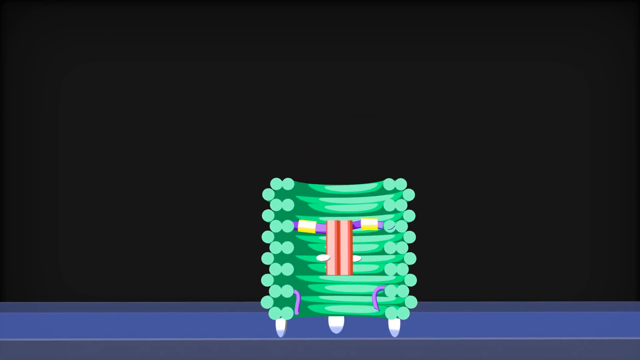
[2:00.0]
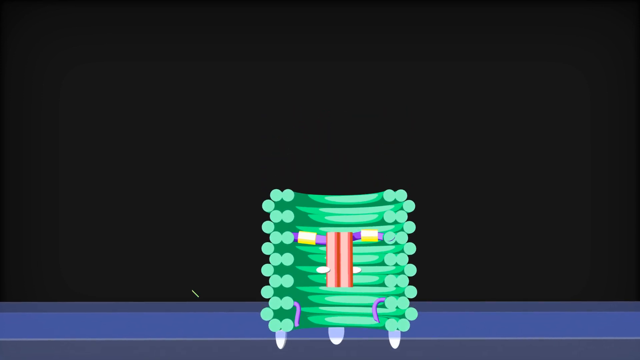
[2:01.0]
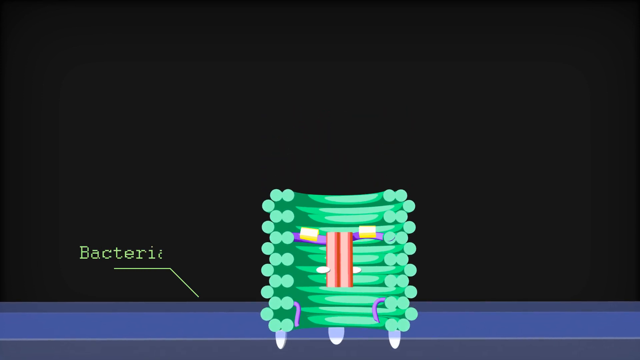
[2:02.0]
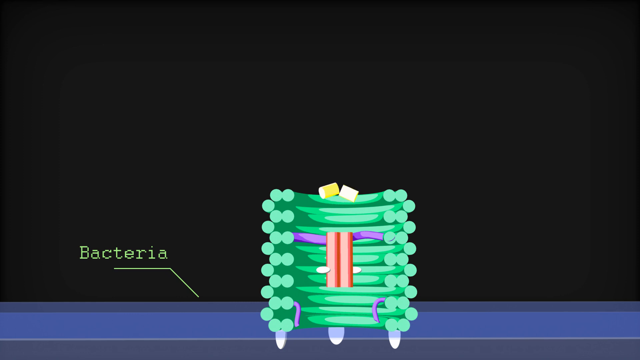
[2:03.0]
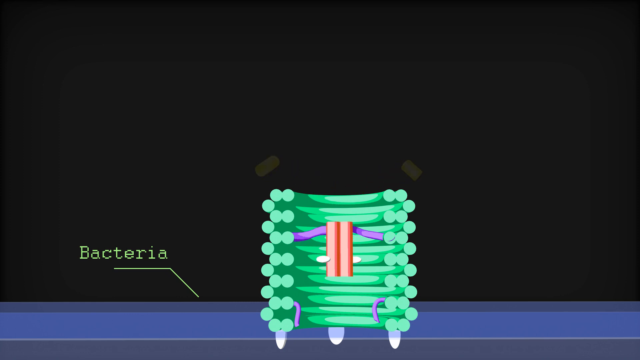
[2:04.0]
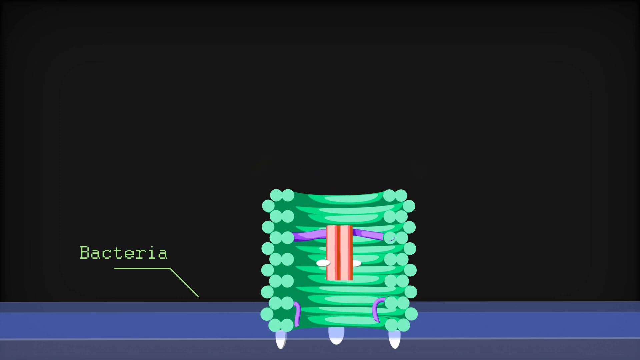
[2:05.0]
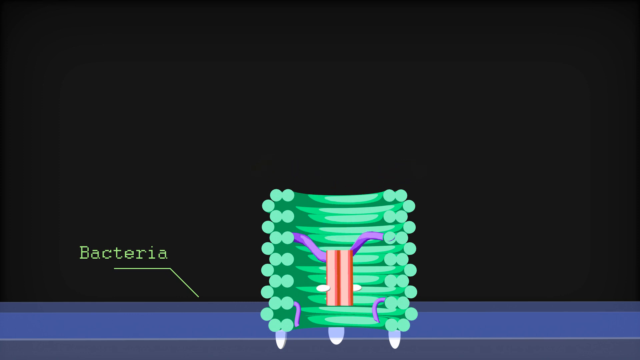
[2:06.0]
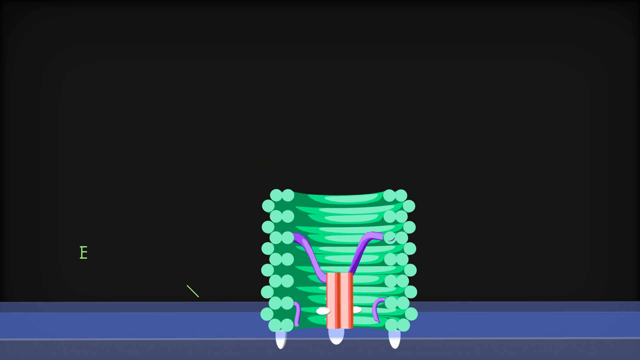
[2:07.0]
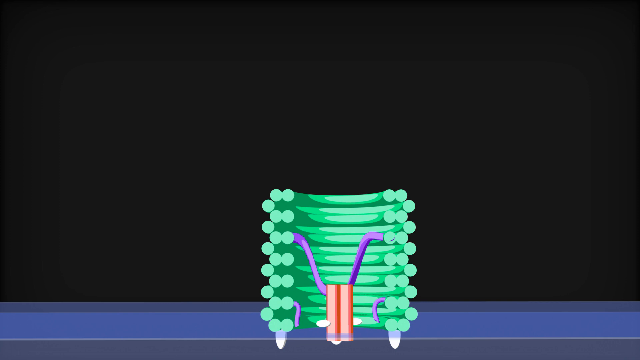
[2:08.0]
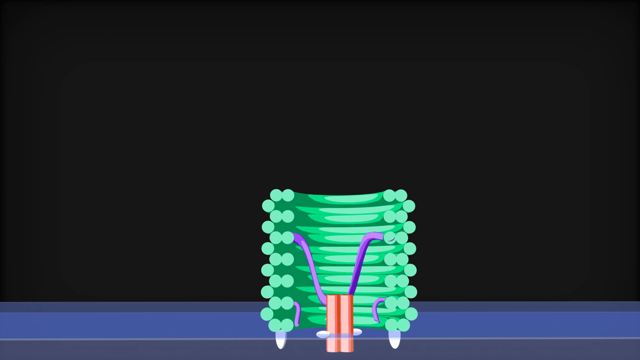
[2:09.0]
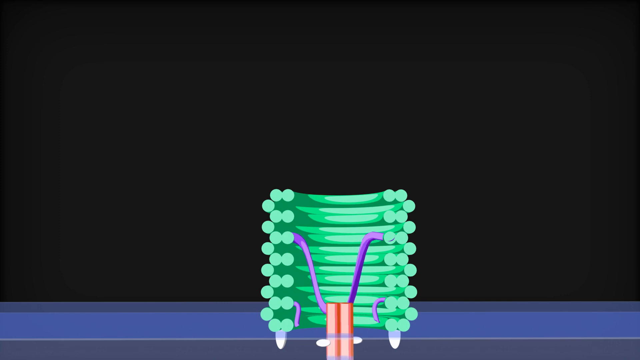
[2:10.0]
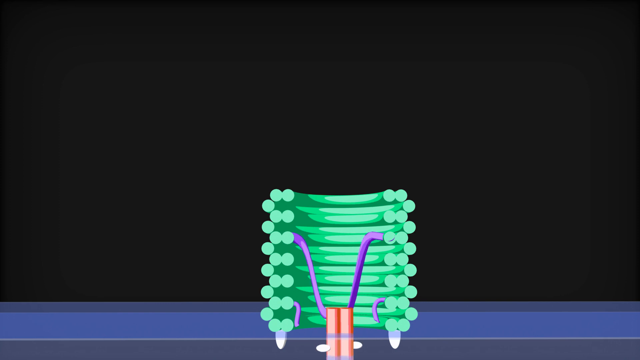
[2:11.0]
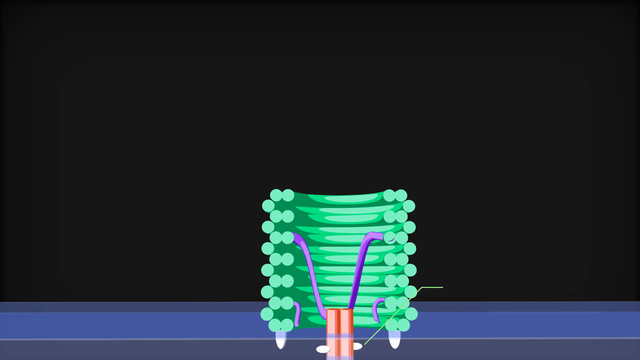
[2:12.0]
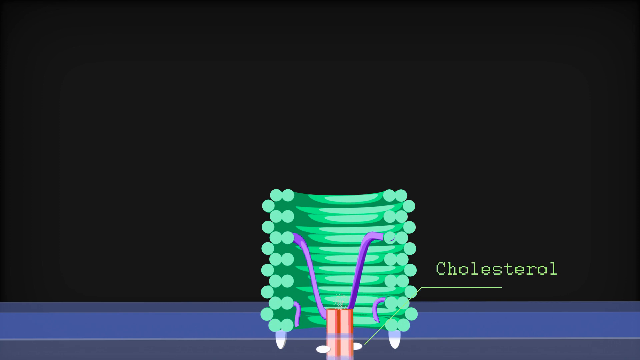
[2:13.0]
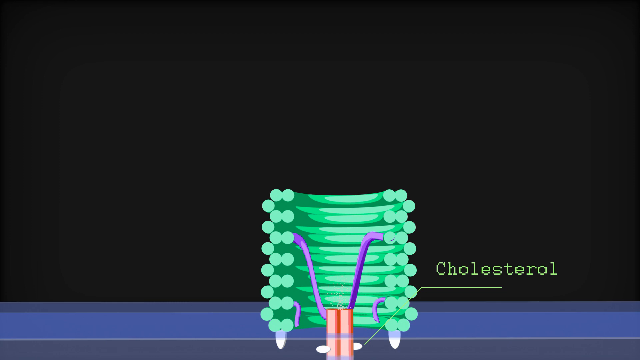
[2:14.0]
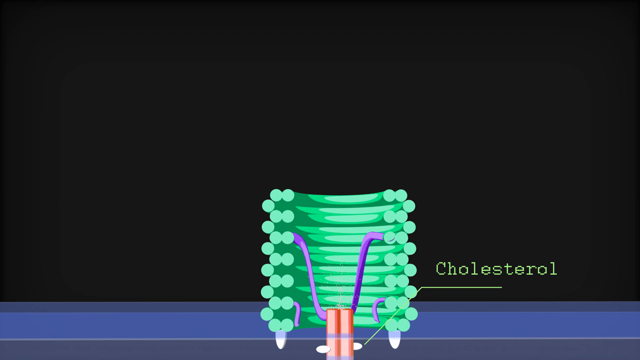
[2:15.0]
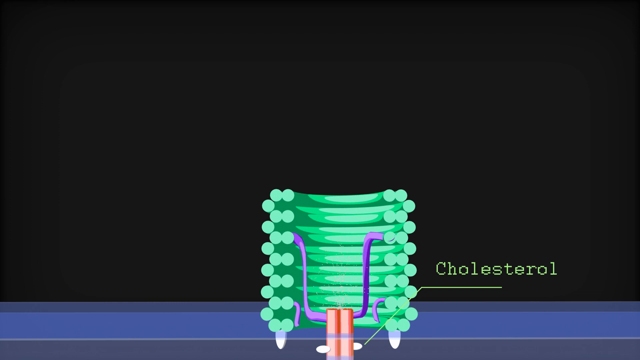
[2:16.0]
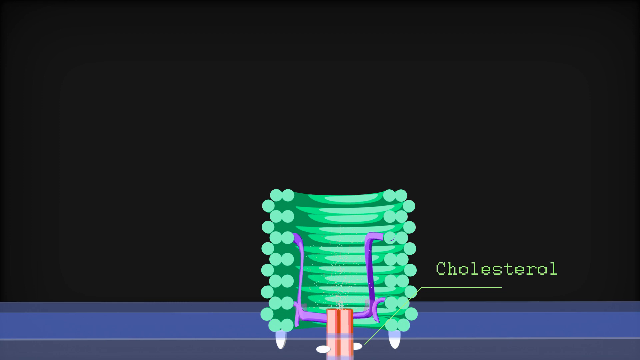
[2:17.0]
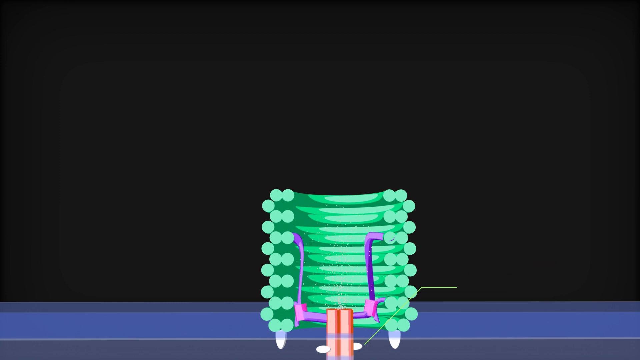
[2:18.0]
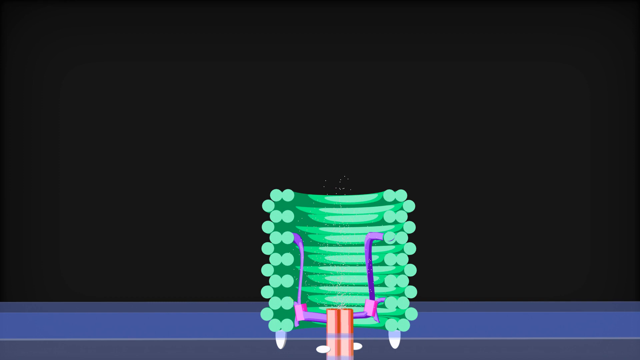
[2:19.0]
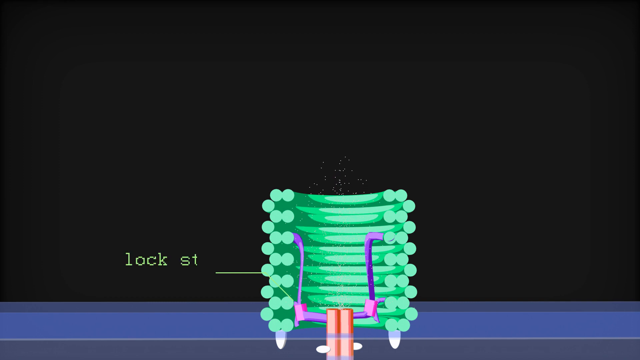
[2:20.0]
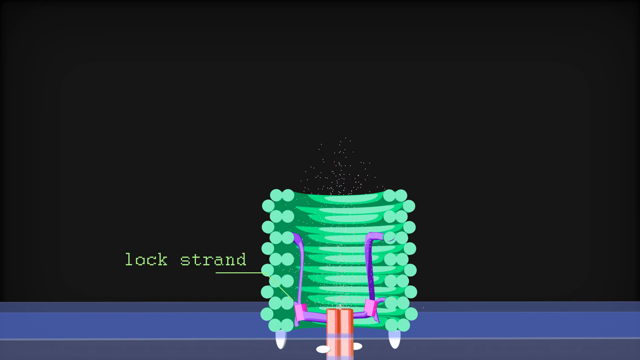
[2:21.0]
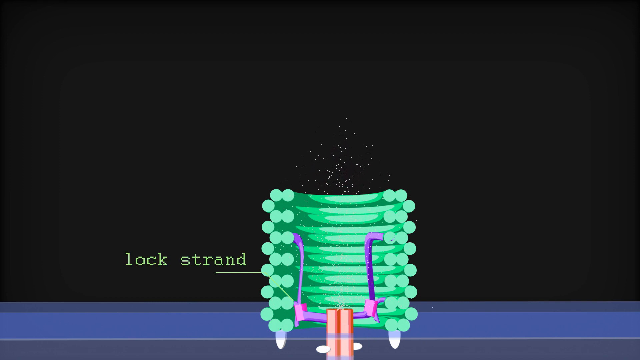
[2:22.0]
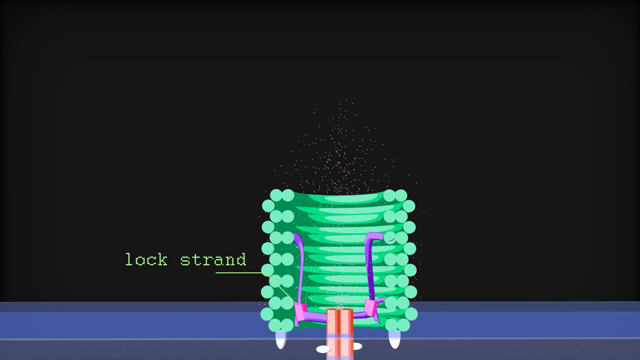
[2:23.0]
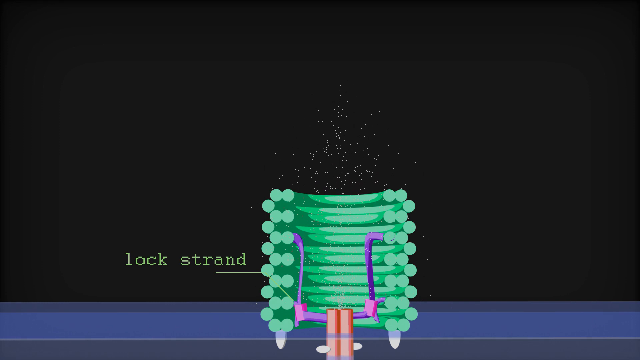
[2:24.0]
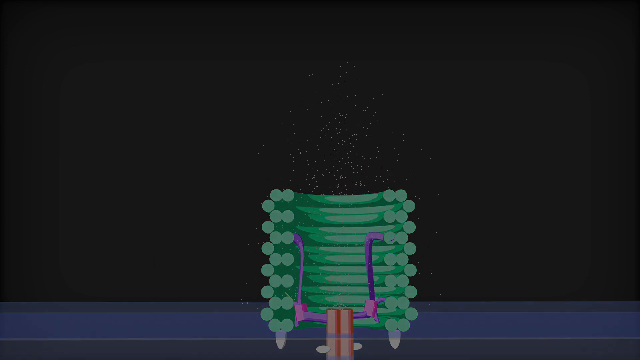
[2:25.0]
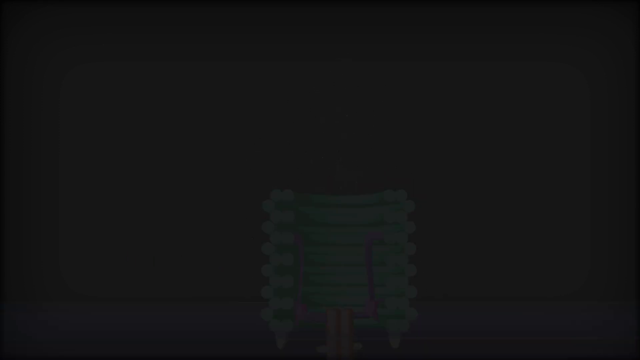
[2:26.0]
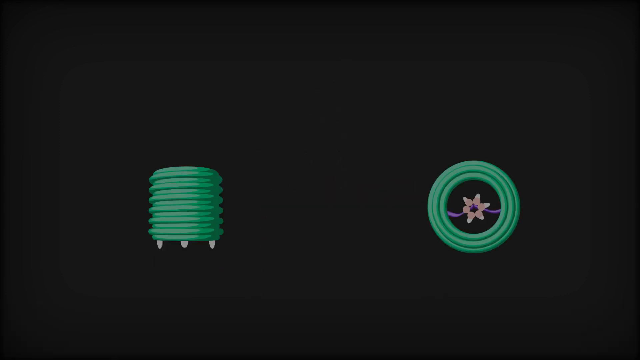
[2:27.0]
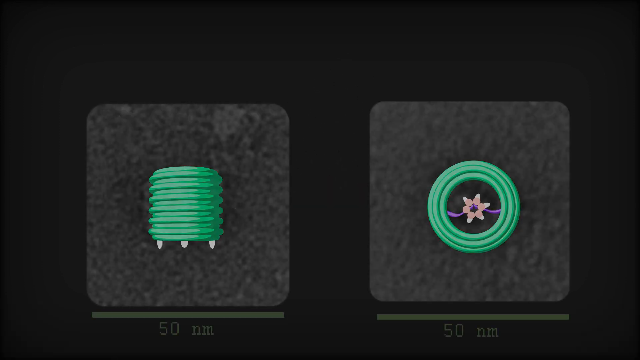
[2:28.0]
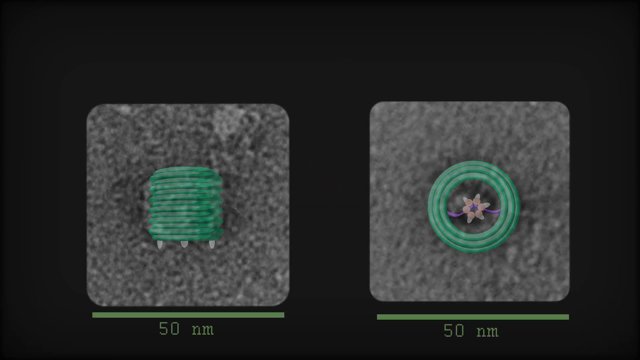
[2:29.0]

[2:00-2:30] Text reading "bacteria" points to the bottom of the frame, though what it indicates cannot really be seen. The pink middle part descends and is labeled "cholesterol". The lock strands separate. The scene then cuts to a black background with two gray squares with rounded corners that look almost like out-of-focus pavement. On the left is something green, sort of a circle with horizontal lines, maybe a sphere. On the right is a circle with three concentric rings in green or aqua green, the same color as the one on the left, with something like a star in the middle. The shot then ends.